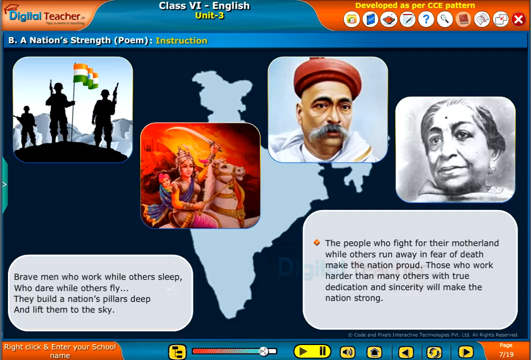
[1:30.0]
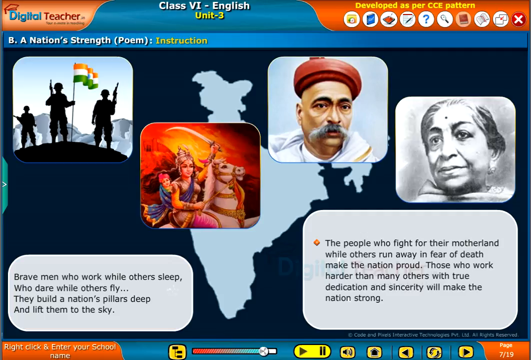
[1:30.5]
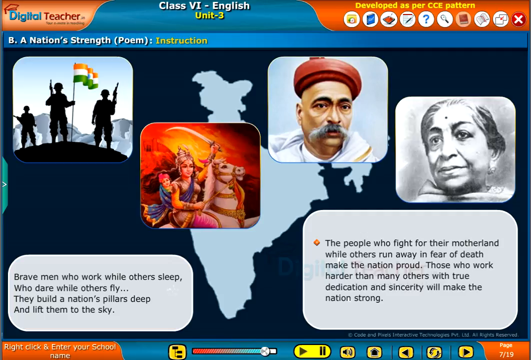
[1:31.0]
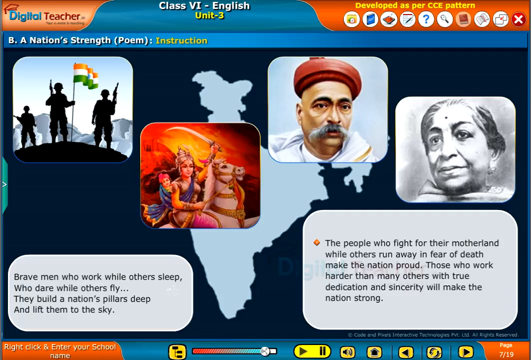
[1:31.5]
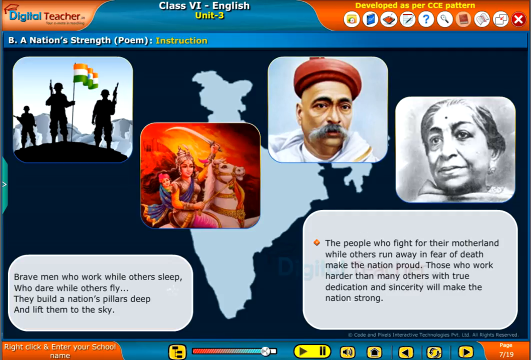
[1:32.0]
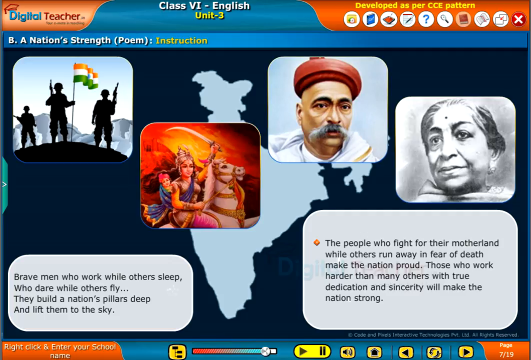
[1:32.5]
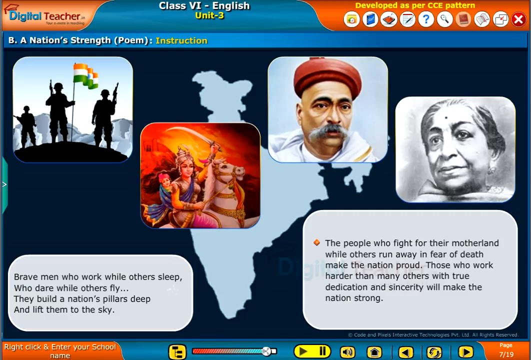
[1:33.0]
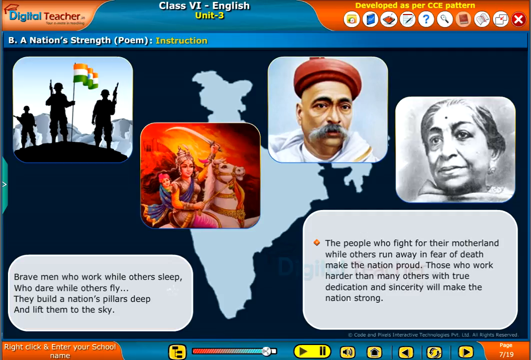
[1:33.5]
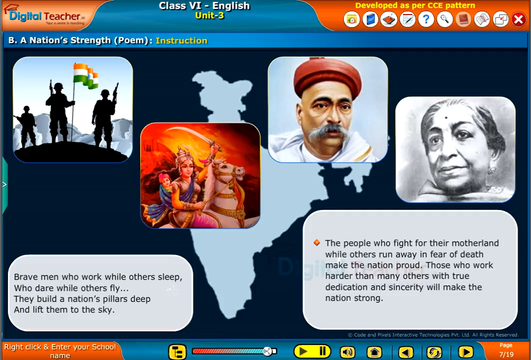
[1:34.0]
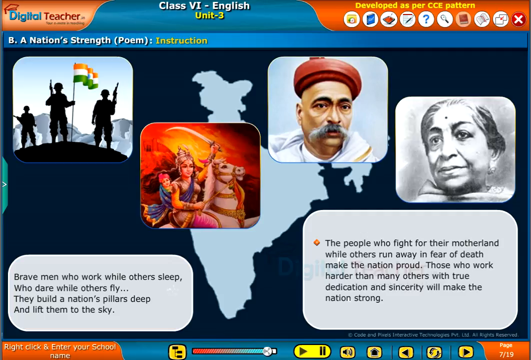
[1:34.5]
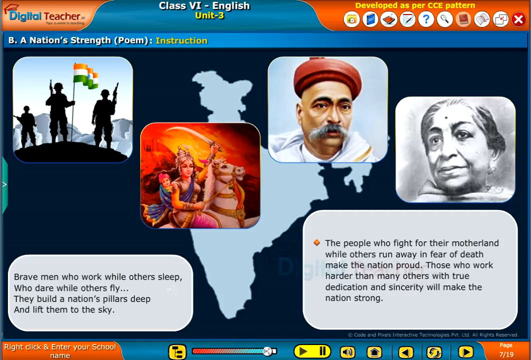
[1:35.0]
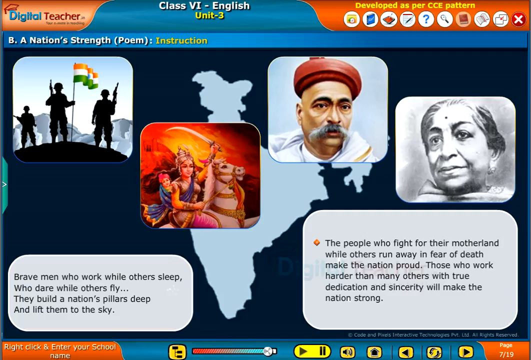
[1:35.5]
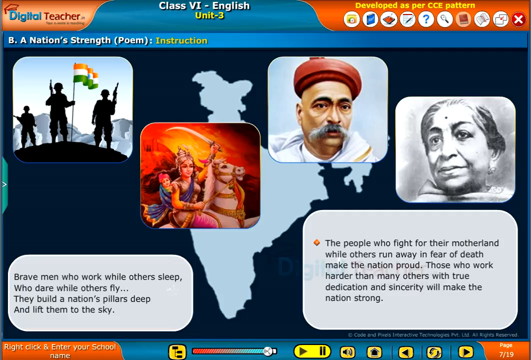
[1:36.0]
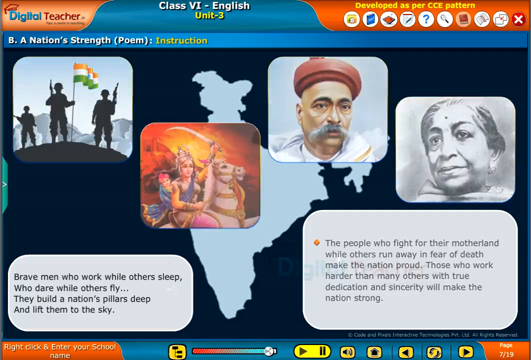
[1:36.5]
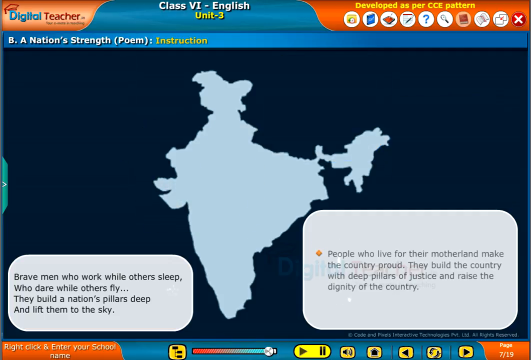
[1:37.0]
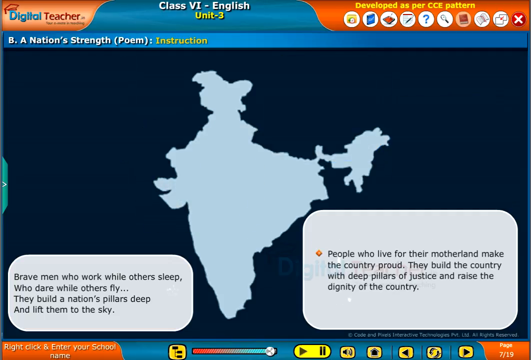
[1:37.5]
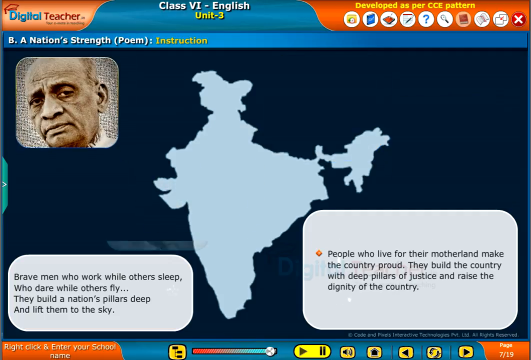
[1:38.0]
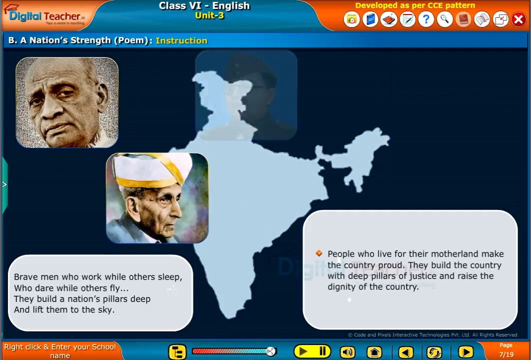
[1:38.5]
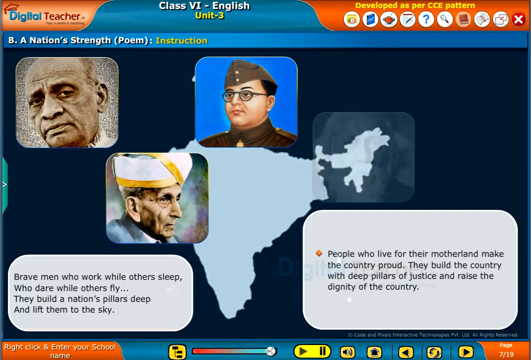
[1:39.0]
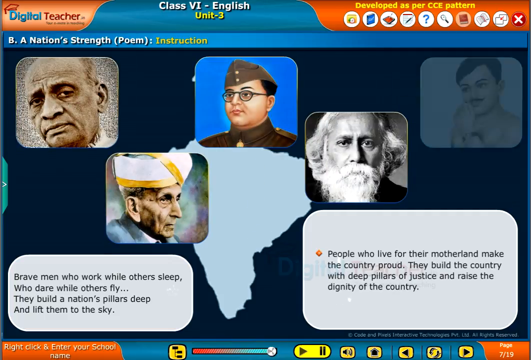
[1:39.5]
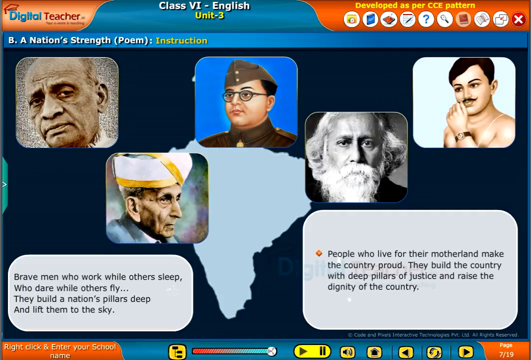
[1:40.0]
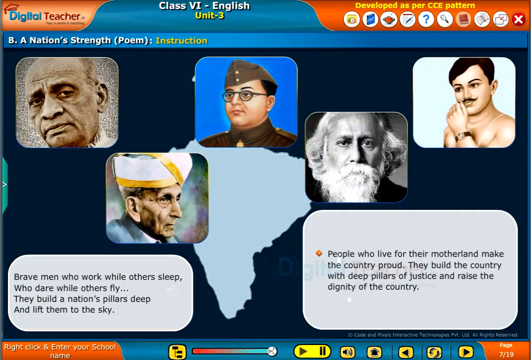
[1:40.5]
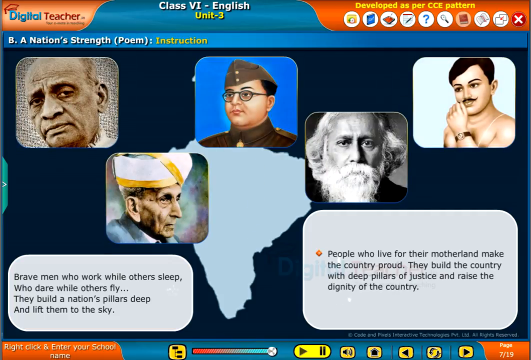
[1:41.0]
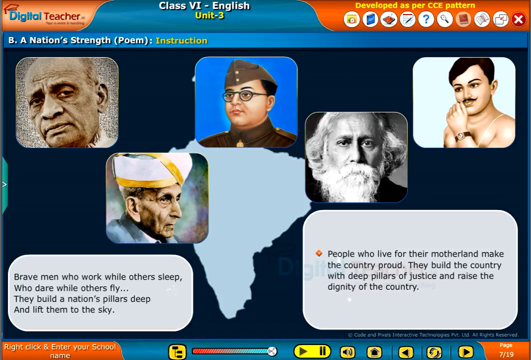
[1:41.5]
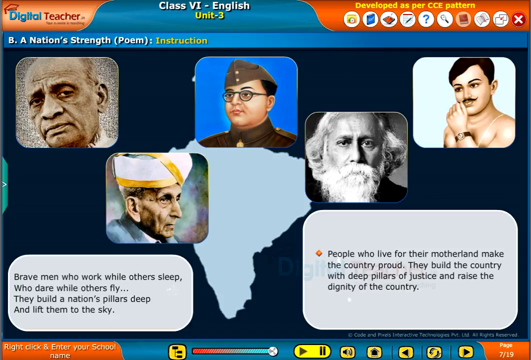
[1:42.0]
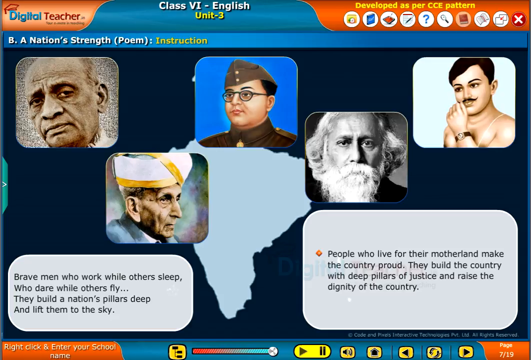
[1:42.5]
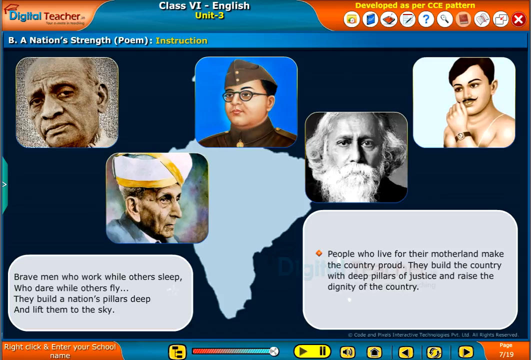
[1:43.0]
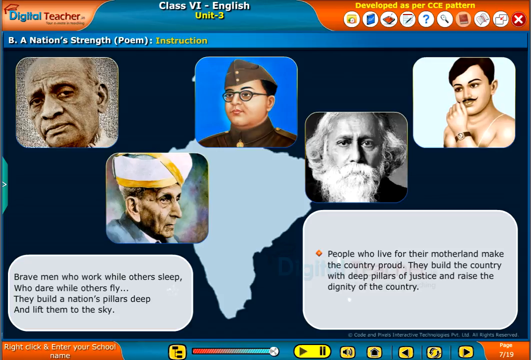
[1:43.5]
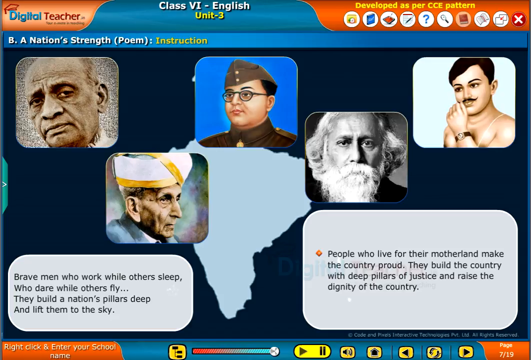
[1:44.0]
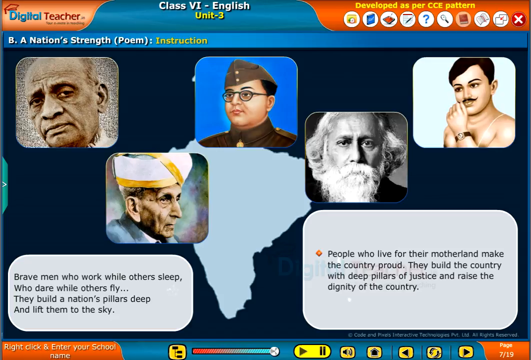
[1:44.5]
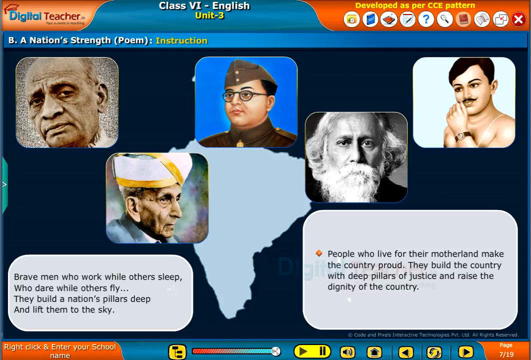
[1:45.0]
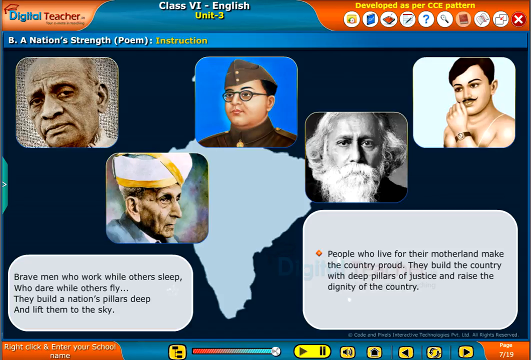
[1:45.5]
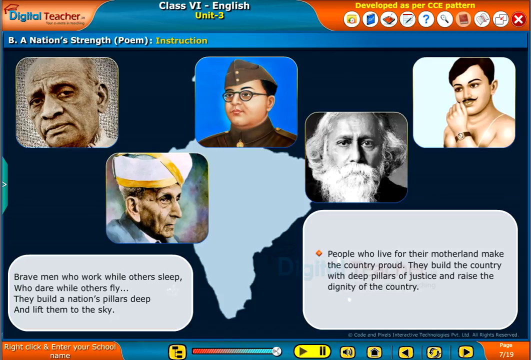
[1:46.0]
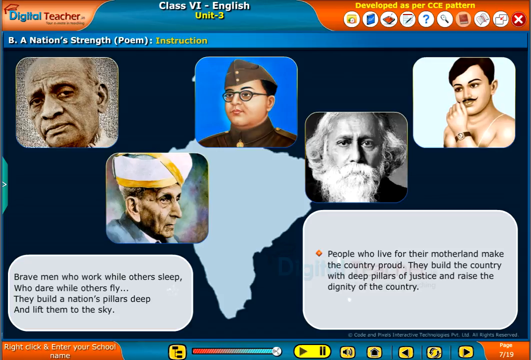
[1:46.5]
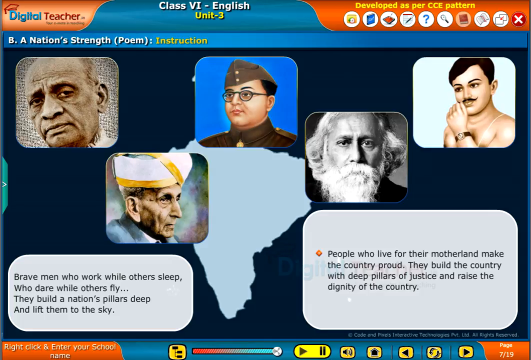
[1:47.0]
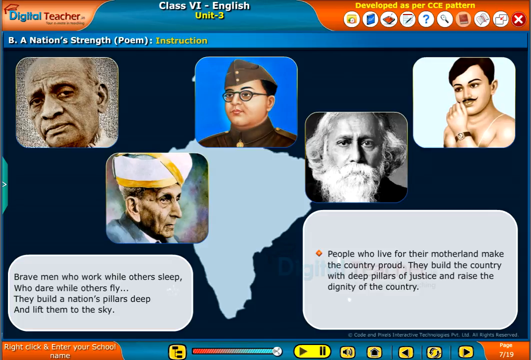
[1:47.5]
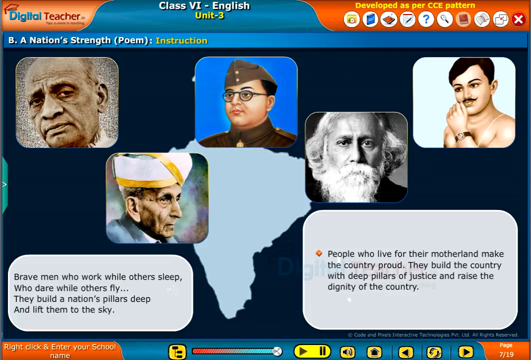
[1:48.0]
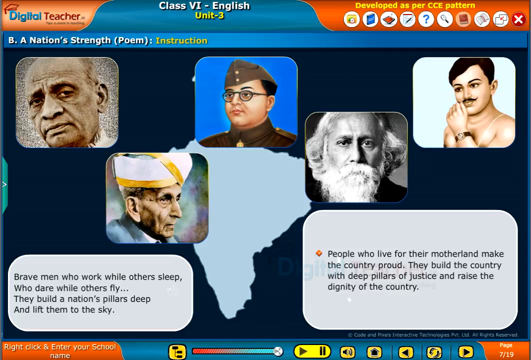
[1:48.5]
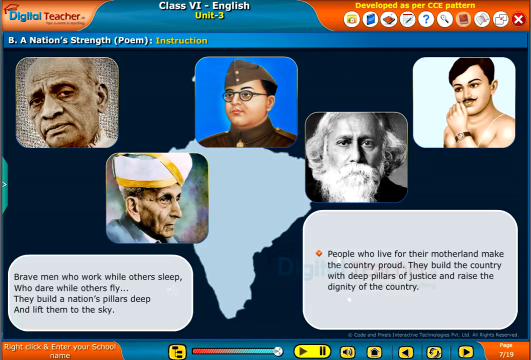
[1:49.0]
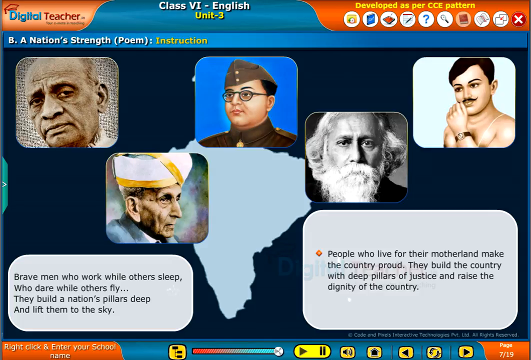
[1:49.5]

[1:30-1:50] A screen of an application for an English class has the words "Class VI - English Unit - 3" written at the top, in the middle of a horizontal frame across the top of the screen. Four images run across the screen. The first shows the silhouette of three soldiers with guns pointed upwards, the soldier in the middle holding the Indian flag. The second shows a woman in elaborate Indian attire holding a sword up in her hand while riding a white horse. The third shows a man with a red, round turban on his head and a long gray mustache. The fourth shows a woman's face with a subtle smile; she looks like Indira Gandhi. At the lower left and lower right are two text inserts on rectangular backgrounds with rounded corners. On the dark screen behind all the images is an outline of the map of India.